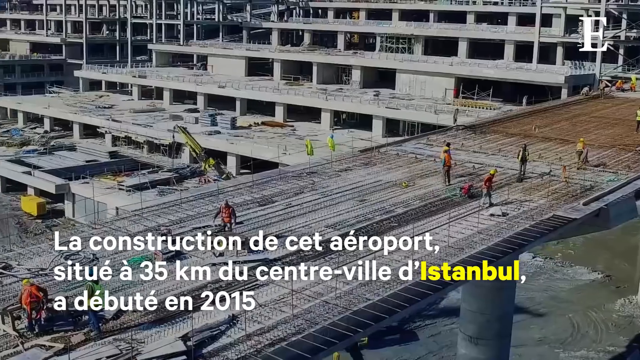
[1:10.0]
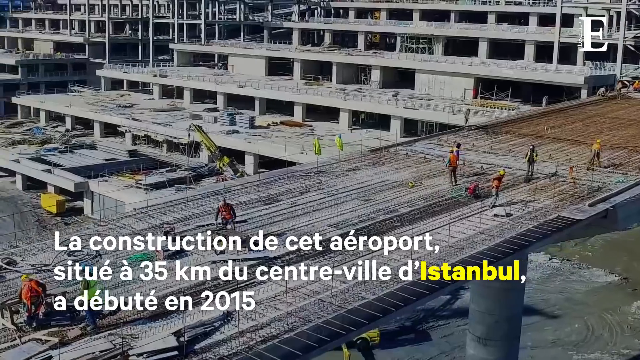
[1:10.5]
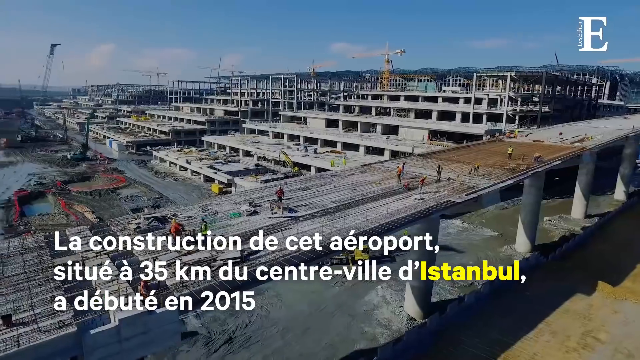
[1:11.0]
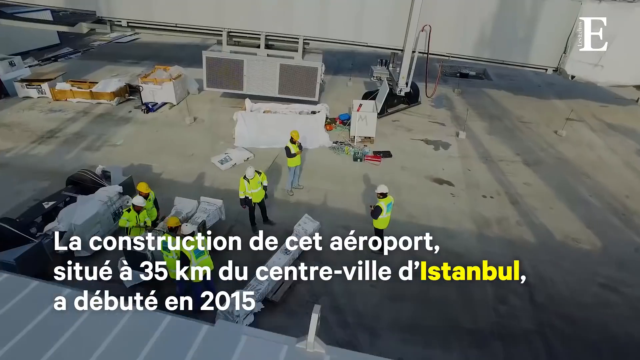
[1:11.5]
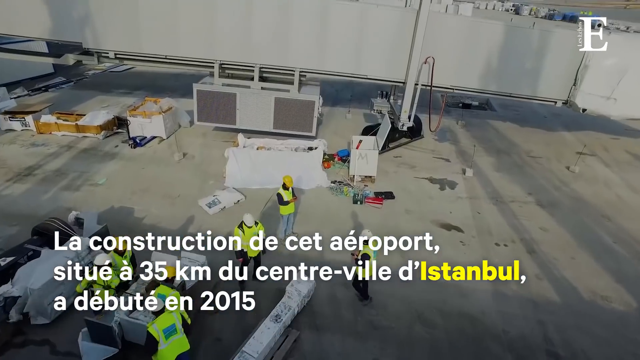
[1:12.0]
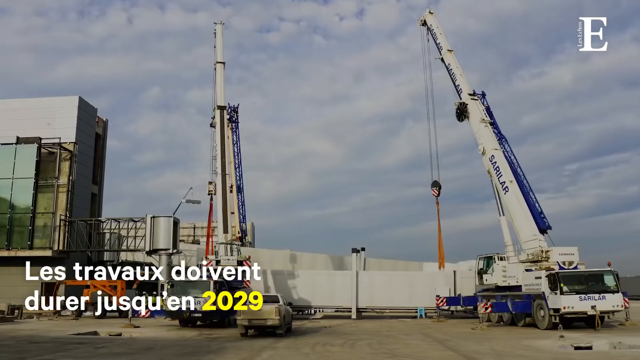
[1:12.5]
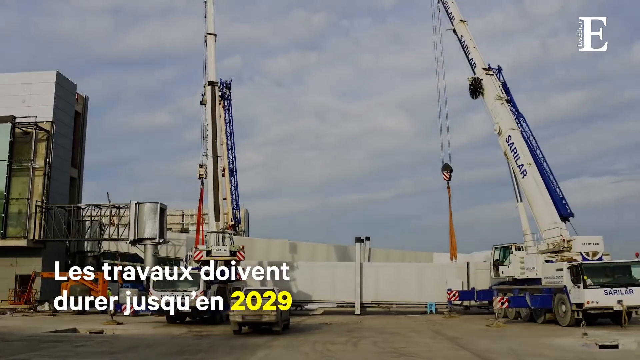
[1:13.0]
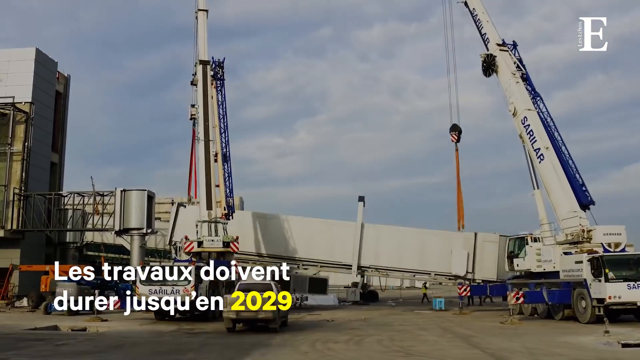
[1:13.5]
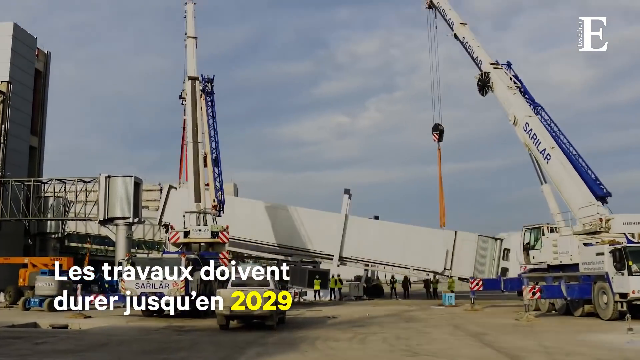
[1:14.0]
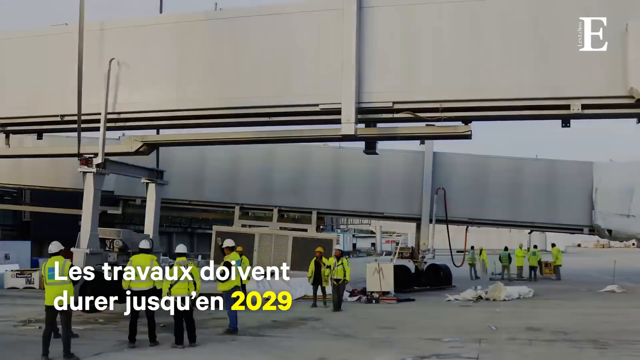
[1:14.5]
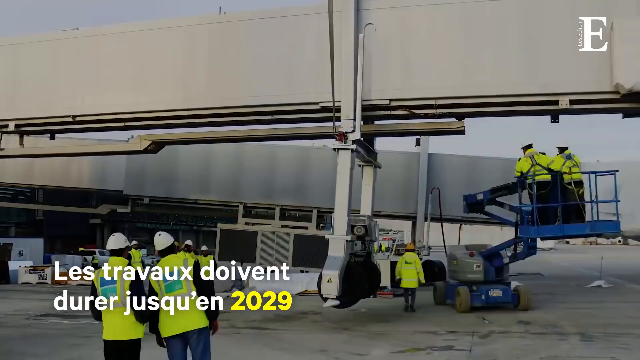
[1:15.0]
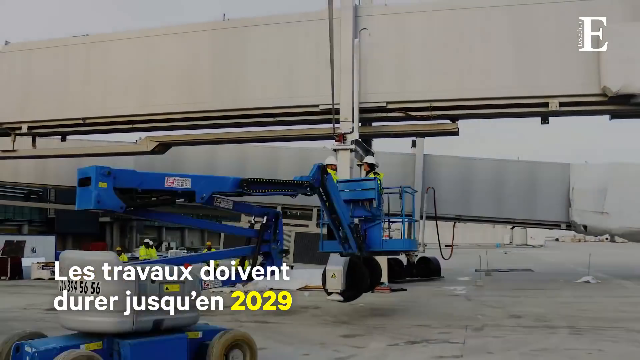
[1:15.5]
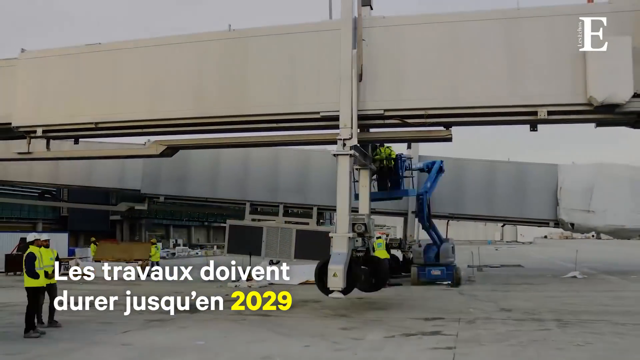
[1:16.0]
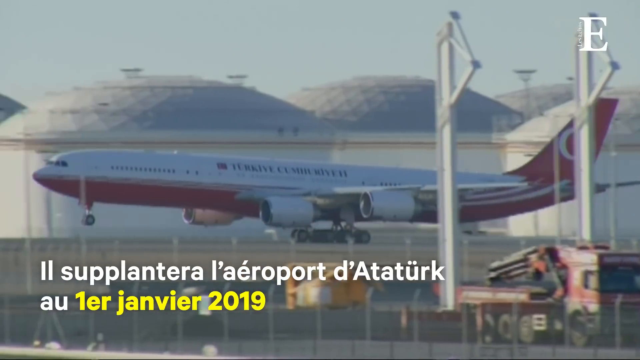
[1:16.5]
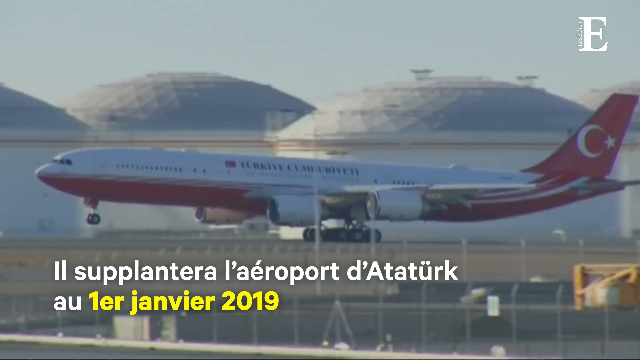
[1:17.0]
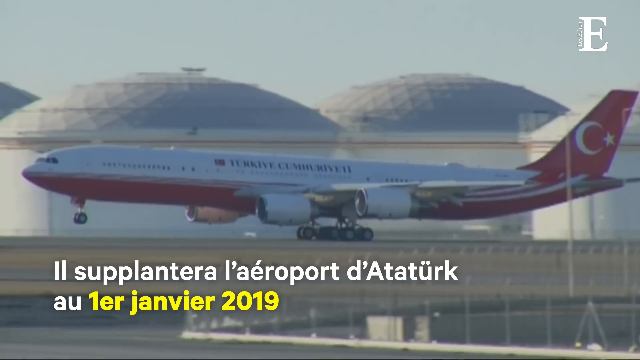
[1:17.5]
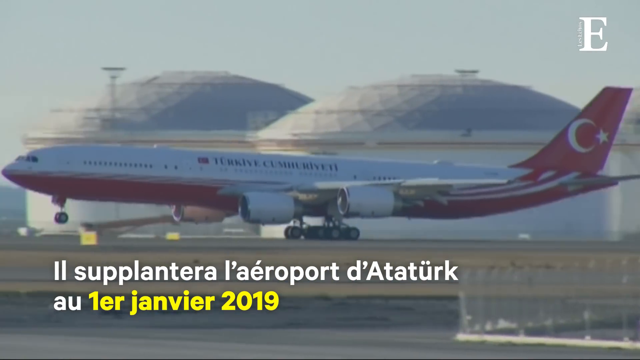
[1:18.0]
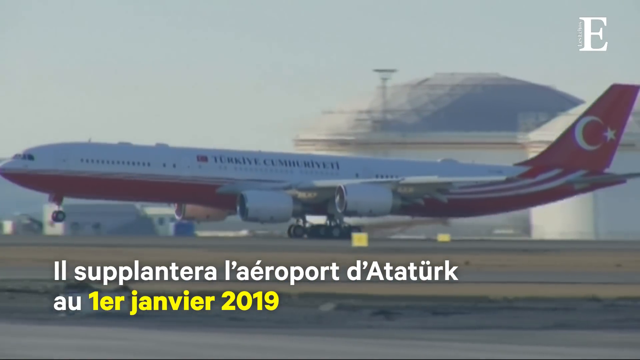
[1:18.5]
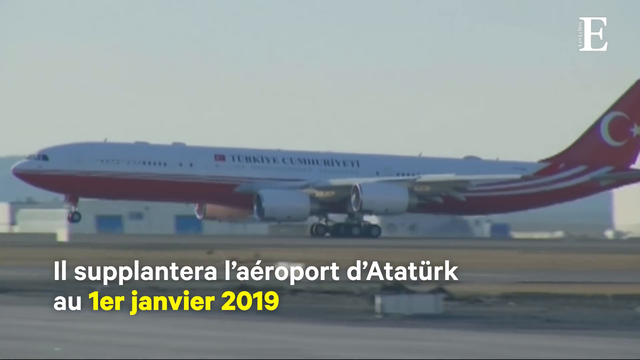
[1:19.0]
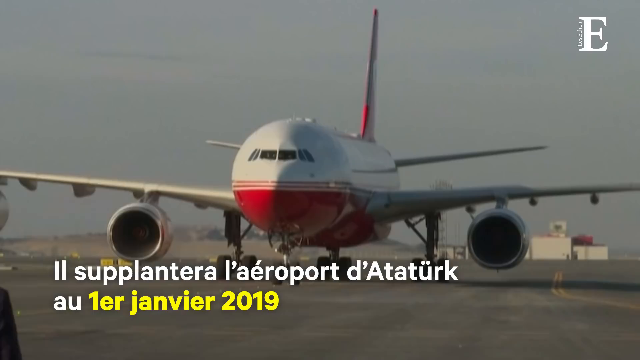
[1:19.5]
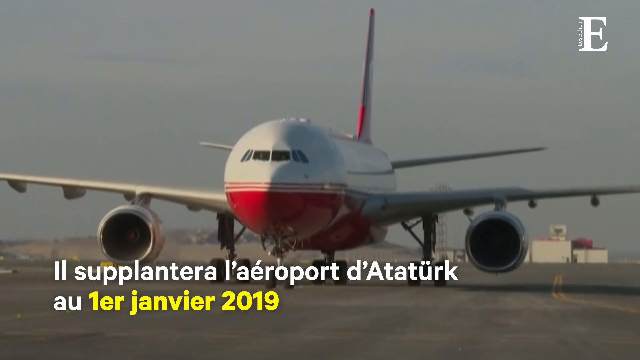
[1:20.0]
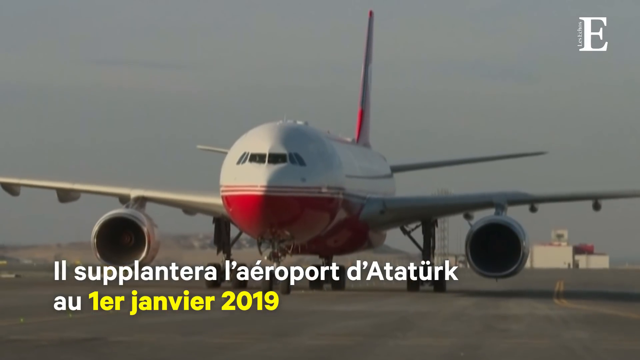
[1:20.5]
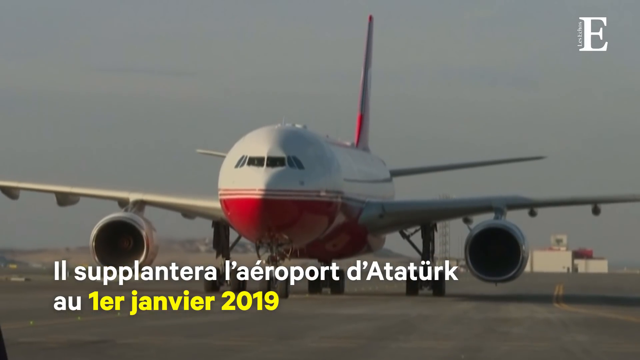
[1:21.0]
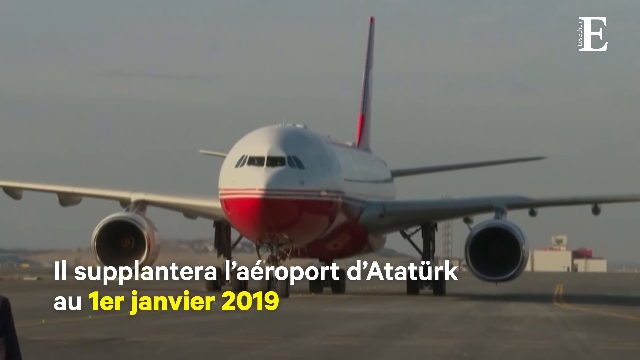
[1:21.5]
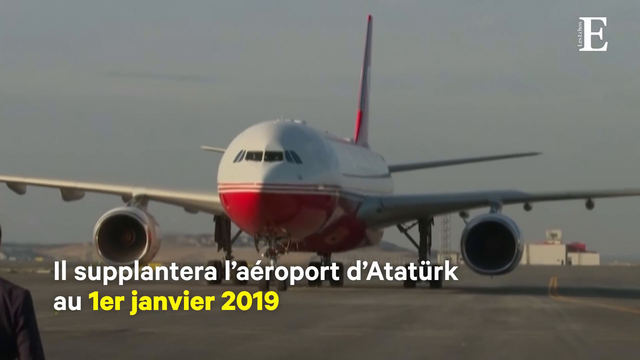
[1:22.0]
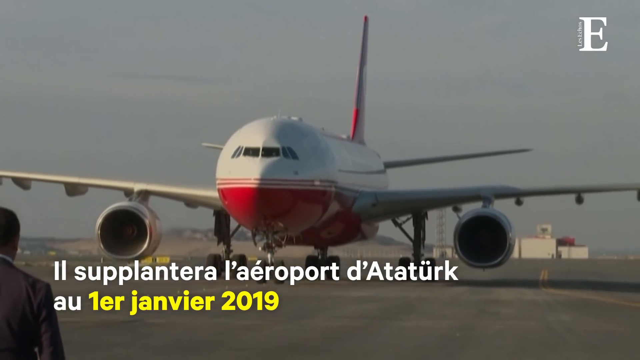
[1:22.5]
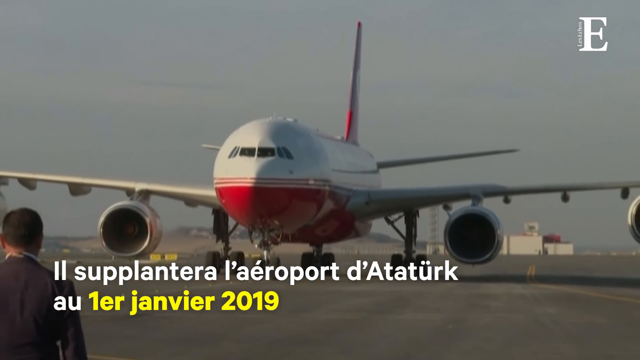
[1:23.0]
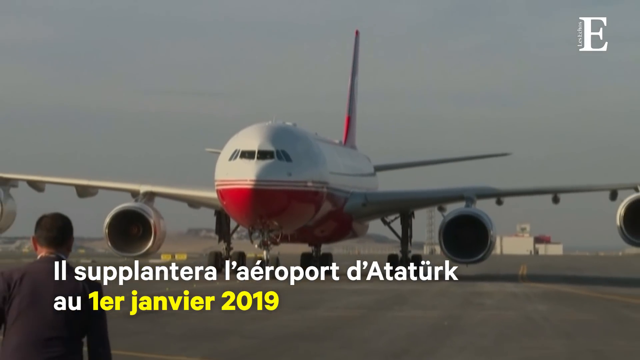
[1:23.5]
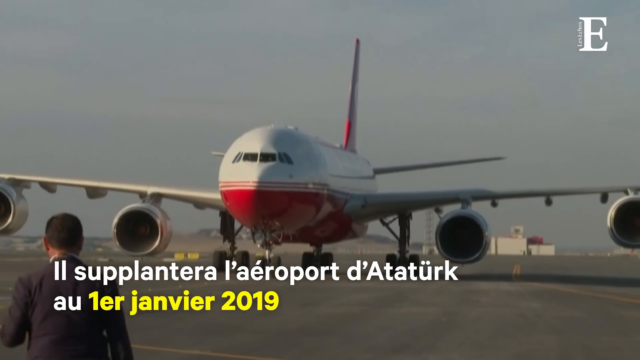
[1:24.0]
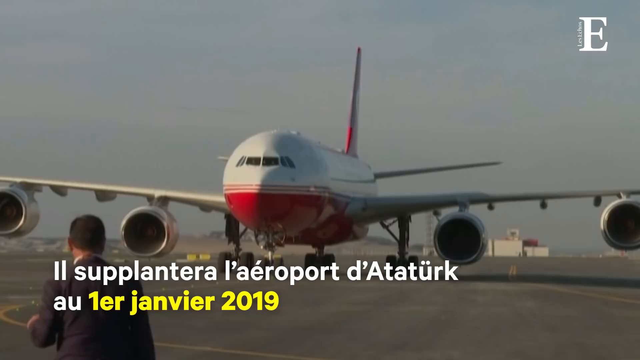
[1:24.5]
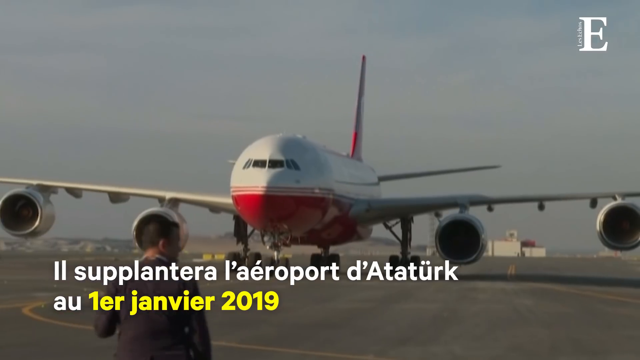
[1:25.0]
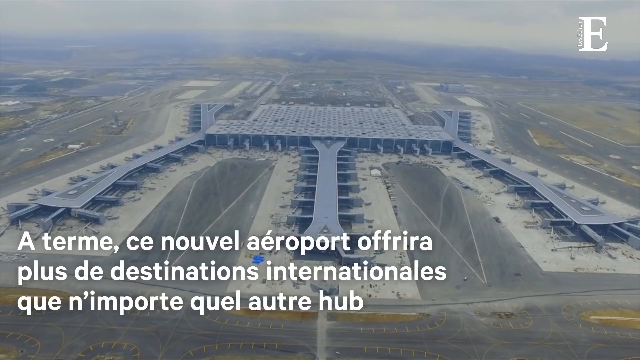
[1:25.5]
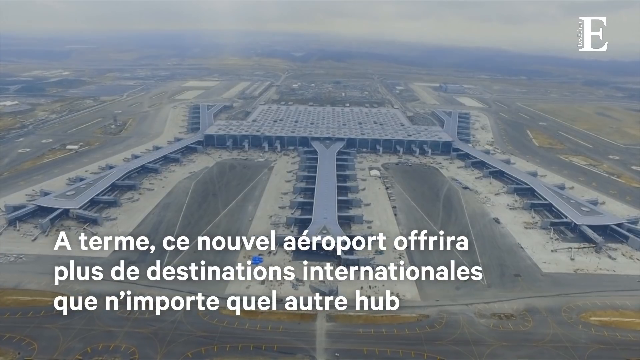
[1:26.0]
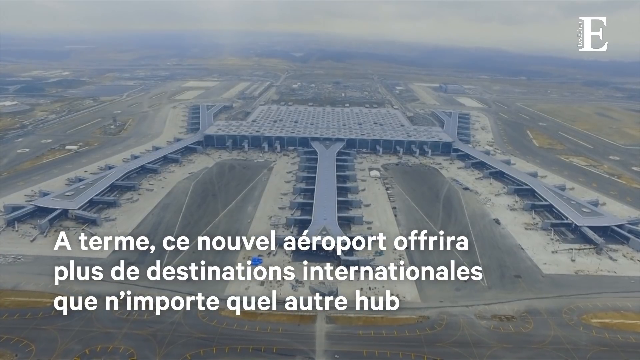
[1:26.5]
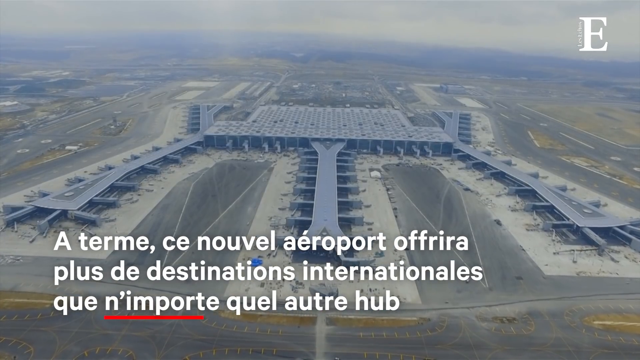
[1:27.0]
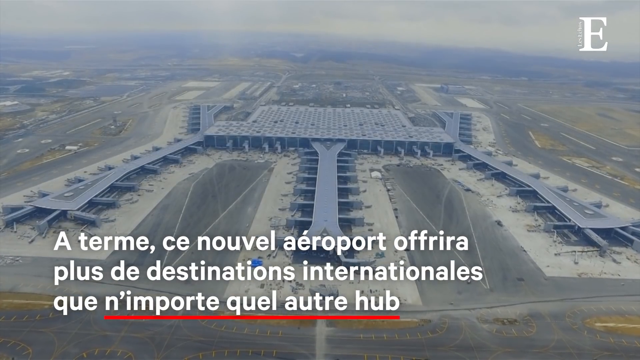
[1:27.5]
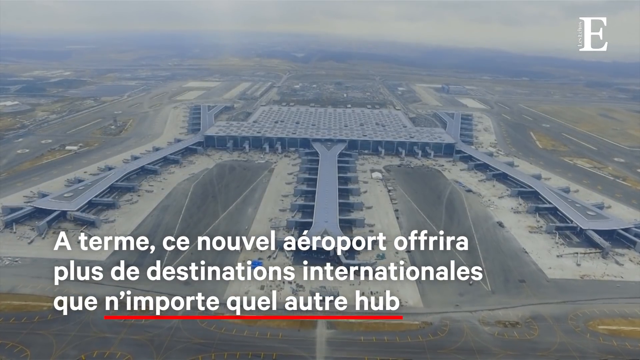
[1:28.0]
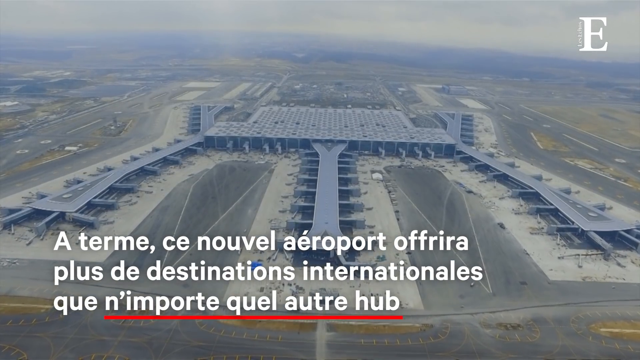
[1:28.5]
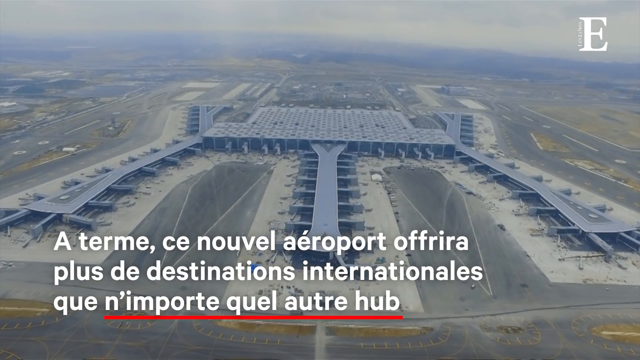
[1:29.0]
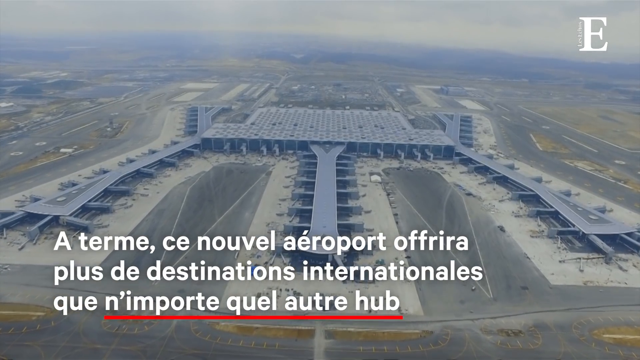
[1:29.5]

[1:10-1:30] Cranes are used to build the walkways that lead people to the planes. An airplane on the tarmac and runway gets ready, takes off, and is also seen taxiing around. The whole airport is shown from above, as if from a drone. On-screen French text seems to mention the airport becoming an important hub, something about 2029, and possibly a first flight in 2019.